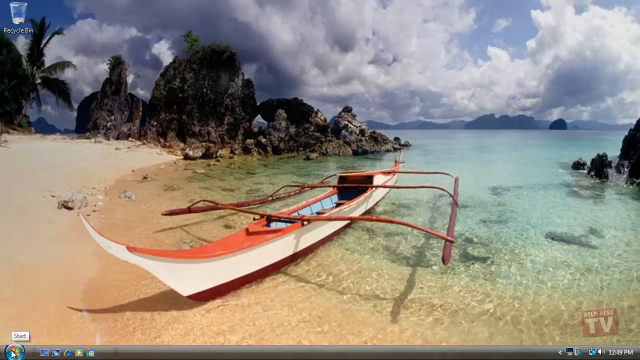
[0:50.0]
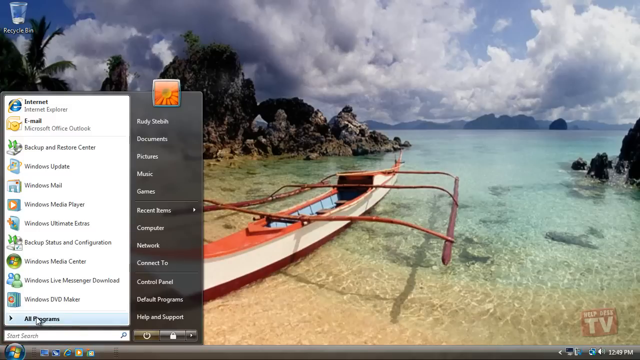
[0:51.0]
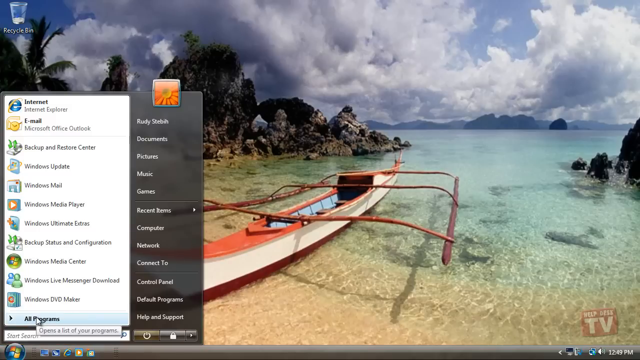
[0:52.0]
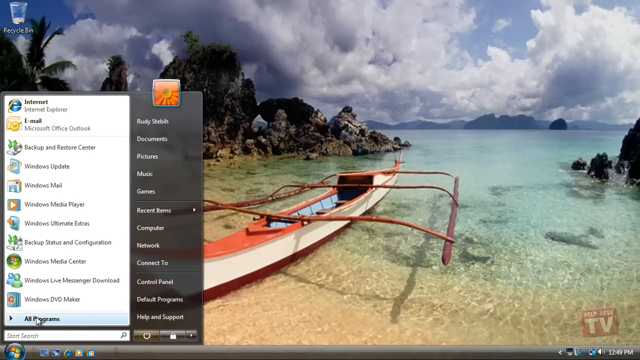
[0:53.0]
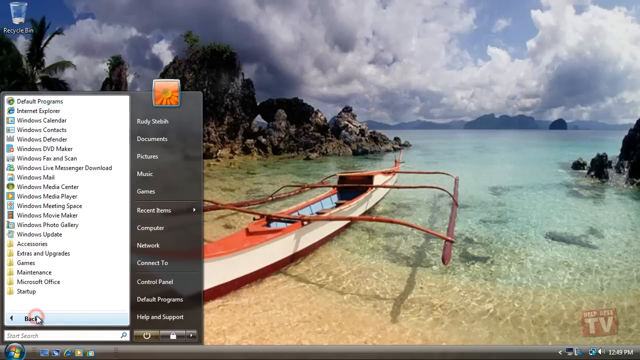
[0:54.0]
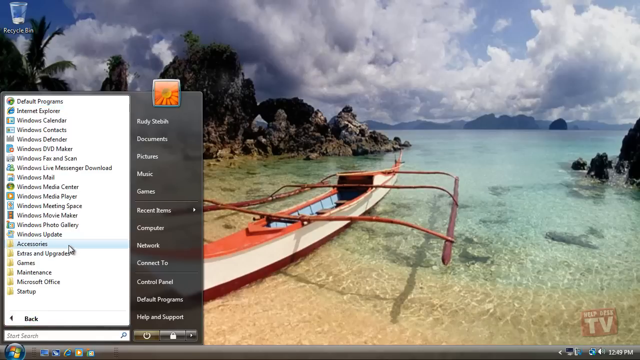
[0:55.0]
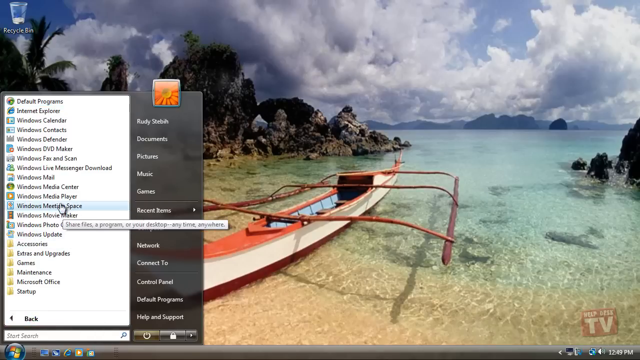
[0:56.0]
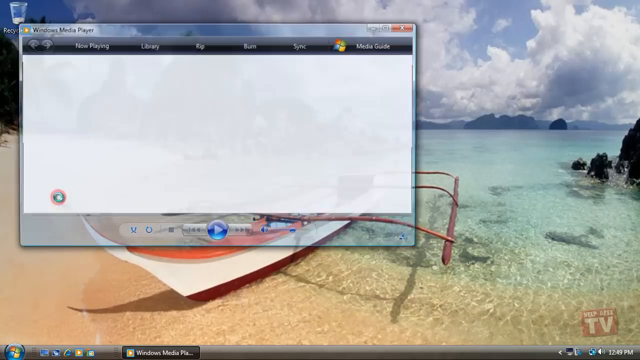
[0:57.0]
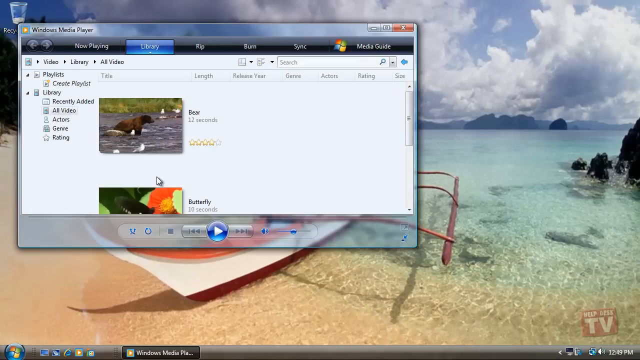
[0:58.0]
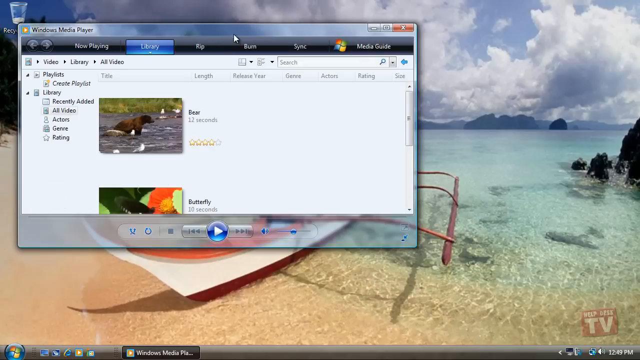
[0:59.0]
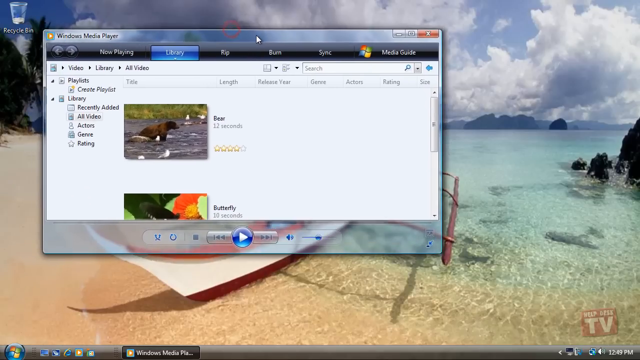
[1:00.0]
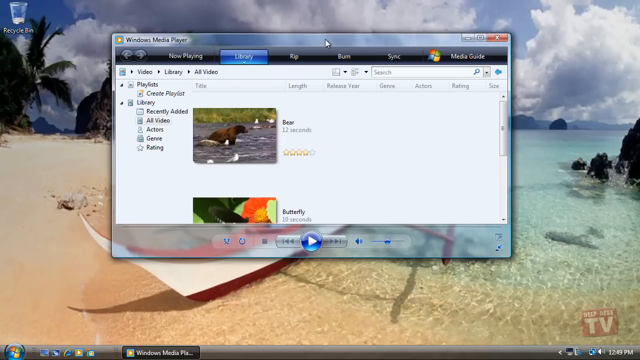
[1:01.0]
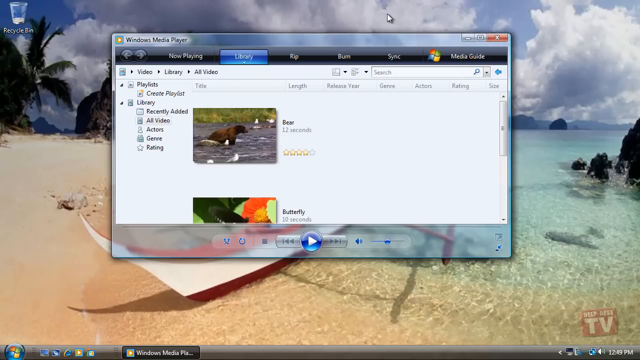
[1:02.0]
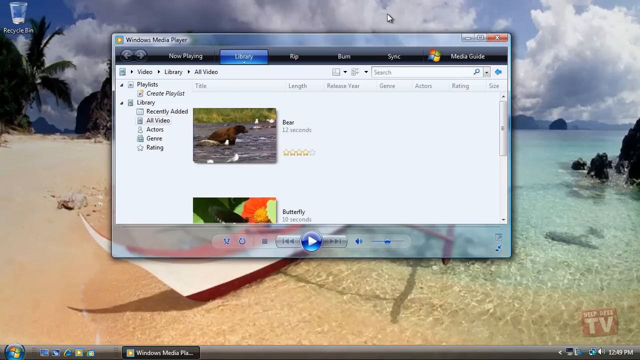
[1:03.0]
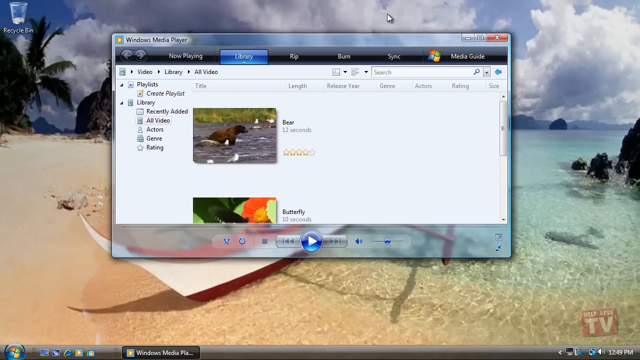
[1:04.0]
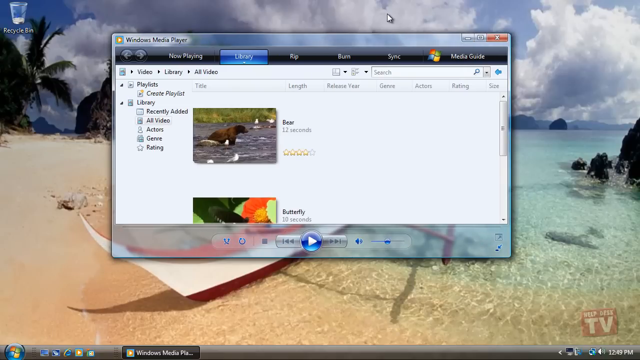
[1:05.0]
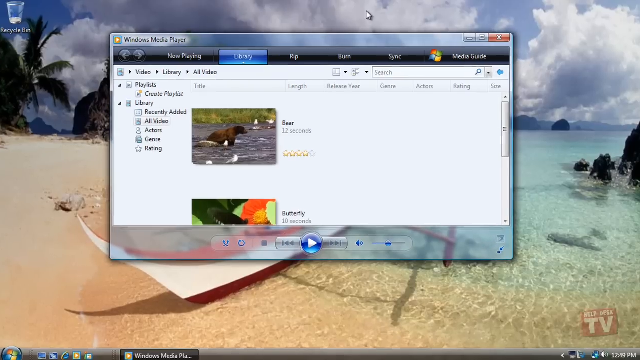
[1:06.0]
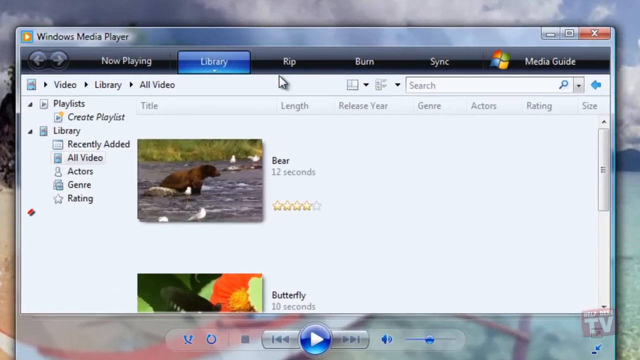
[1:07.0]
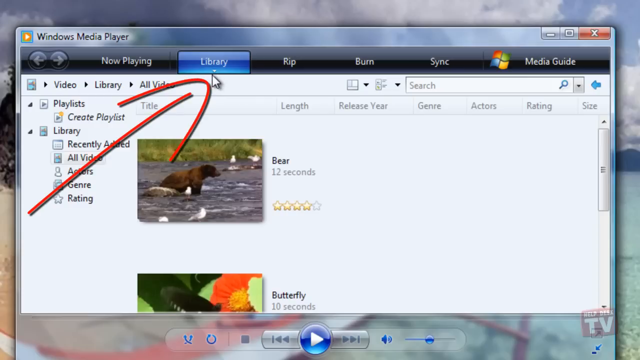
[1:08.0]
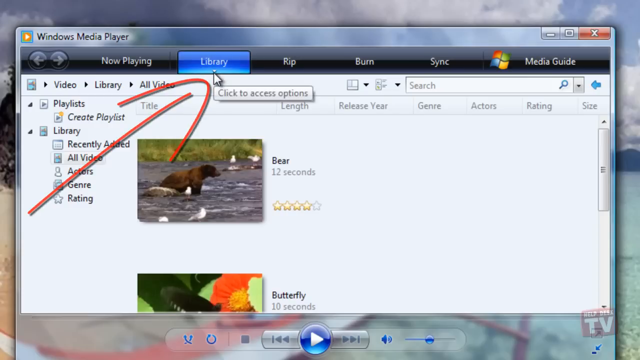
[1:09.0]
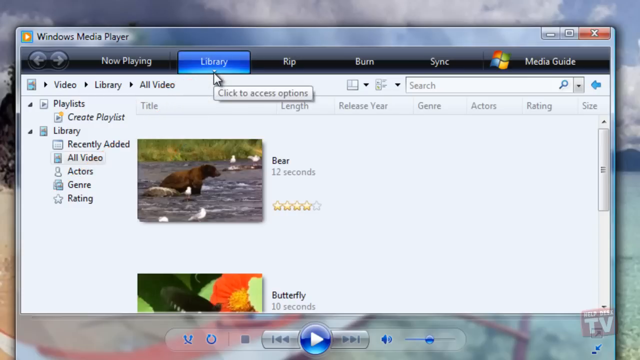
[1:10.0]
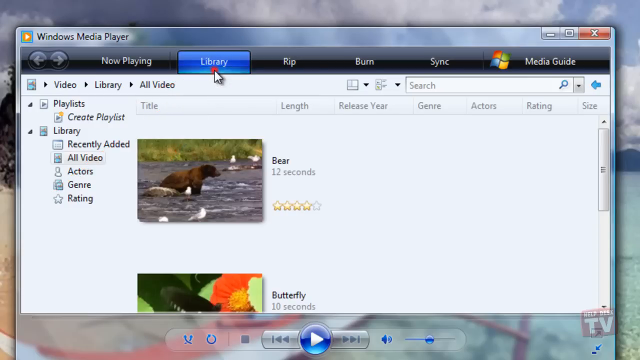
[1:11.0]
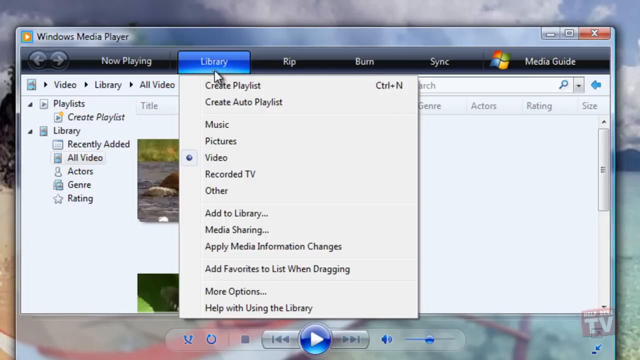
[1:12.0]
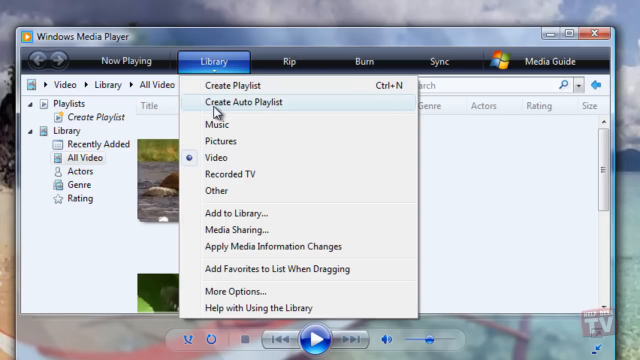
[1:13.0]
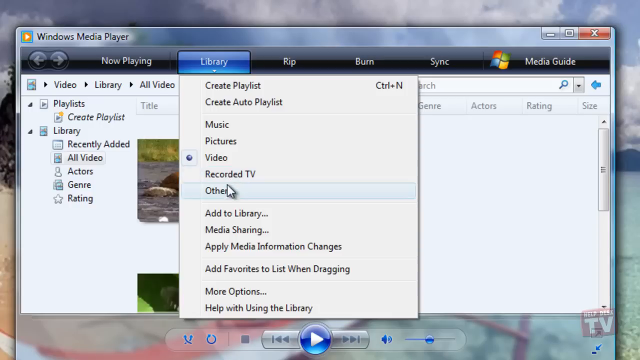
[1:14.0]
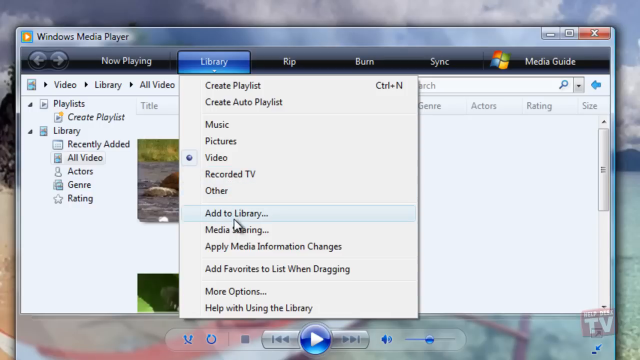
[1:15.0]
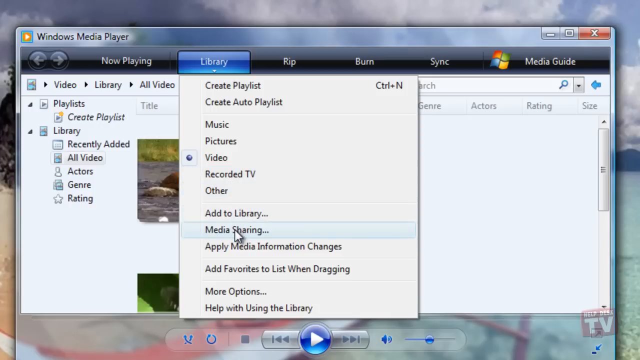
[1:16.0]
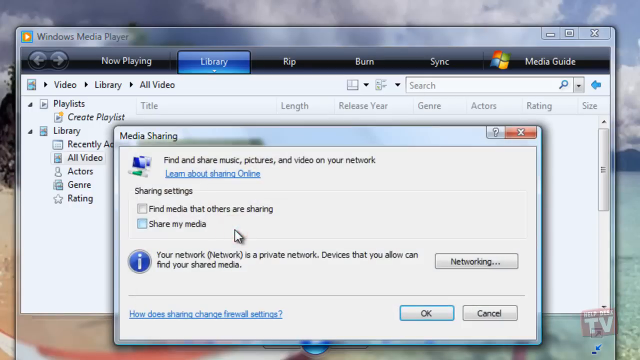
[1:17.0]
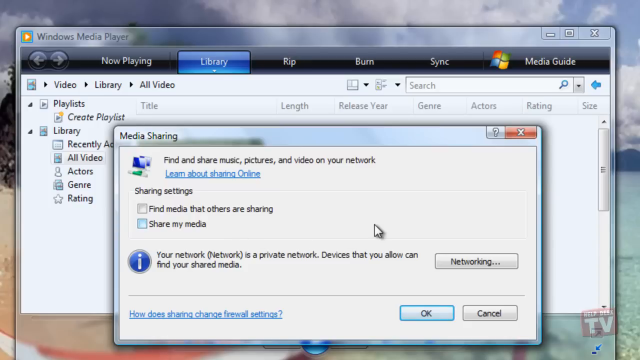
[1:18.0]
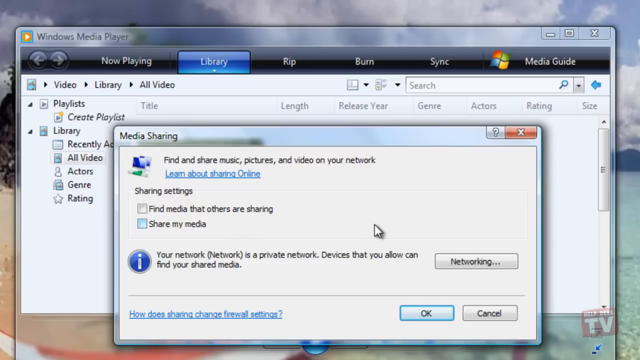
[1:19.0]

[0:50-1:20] He clicks the Start button, moves the cursor up to All Programs and clicks it, then goes up to the Accessories folder in the menu, pauses for a second, and moves a little further up to click Windows Media Player. A Windows Media Player window opens, and he grabs its top bar with the cursor and moves it to the center of the screen. The window has a menu at the top reading "Now Playing", "Library", "Rip", "Burn", "Sync", with the Microsoft or Windows logo on the right. At the very top right, on a black banner, is "Media Guide", and at the far left of that menu are back and forward arrows. "Library" is highlighted in blue to show it is open. Below it is a path reading "Video", "Library", "All Video", with All Video currently open. The first video is titled "Bear", is 12 seconds long, is rated four stars, and has a thumbnail of a brown bear that appears to be in a river. Beneath it is a thumbnail for a butterfly video listed as 10 seconds; it is cut off, with only its top portion visible. The cursor moves above the window and the screen zooms in. A red line appears along with an arrow pointing to the Library menu. He clicks it, bringing up a dropdown in which the Video option is already selected, scrolls down, and clicks Media Sharing, which opens a Media Sharing pop-up window. Its first line says "Find and Share Music, Pictures, and Video on Your Network". He draws a red line on the screen next to "Sharing Settings", just below, and then draws a red box around the Sharing Settings options.